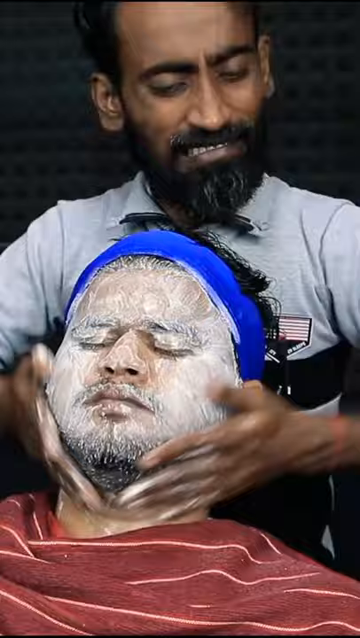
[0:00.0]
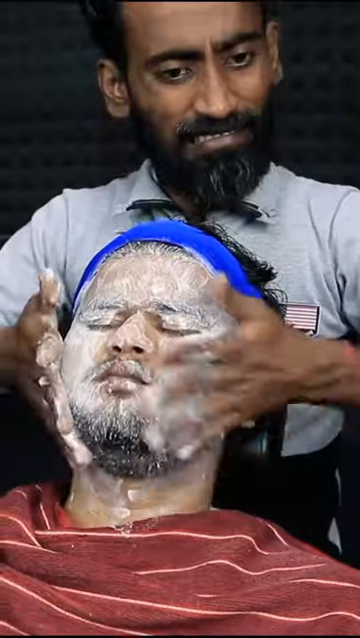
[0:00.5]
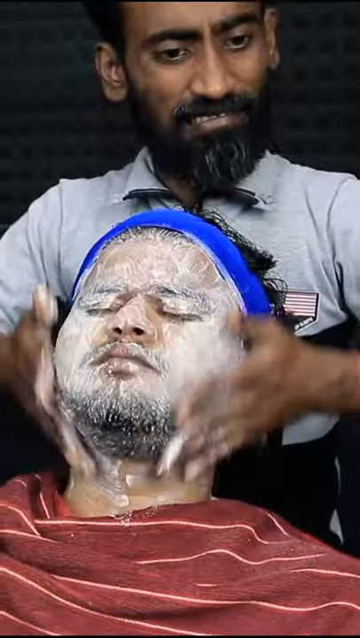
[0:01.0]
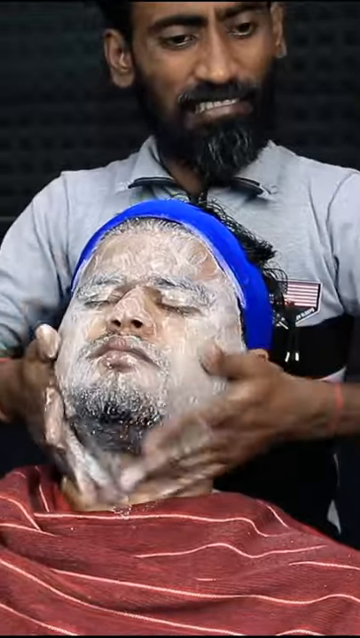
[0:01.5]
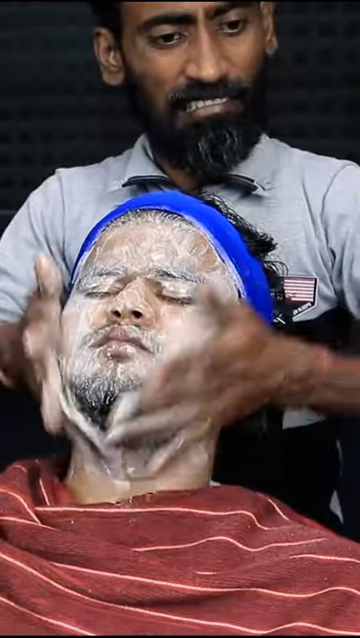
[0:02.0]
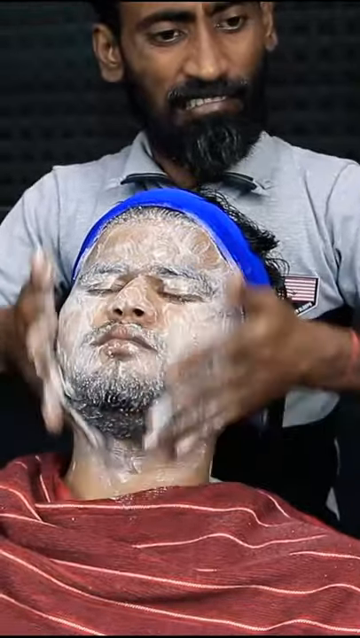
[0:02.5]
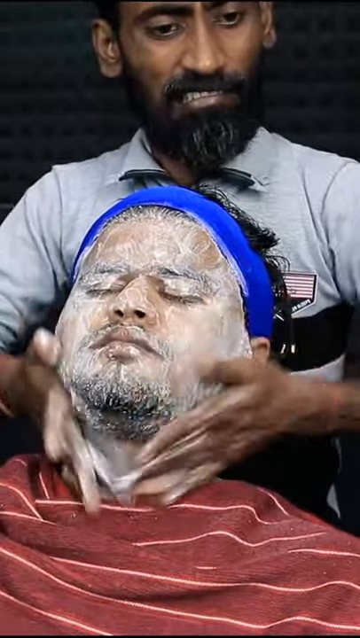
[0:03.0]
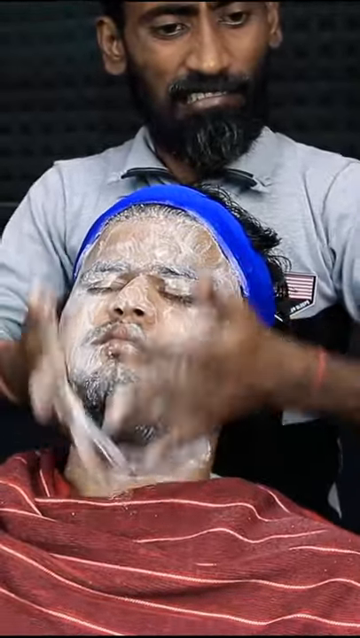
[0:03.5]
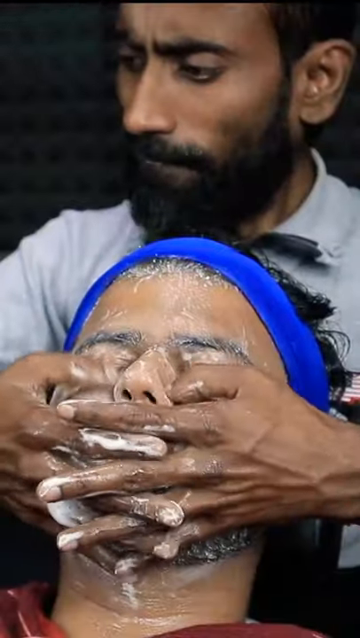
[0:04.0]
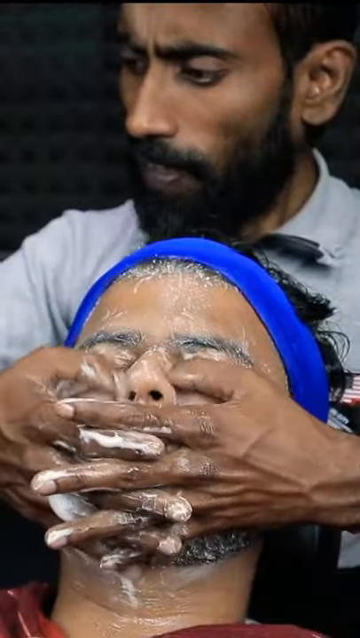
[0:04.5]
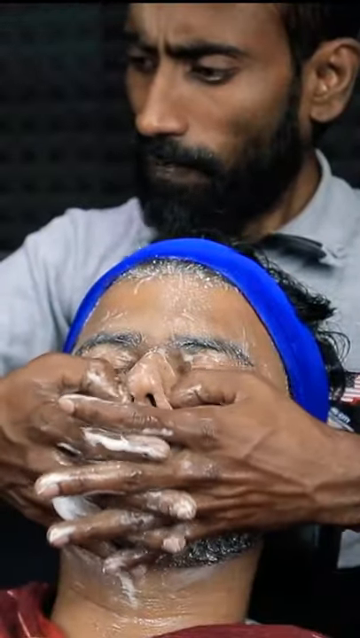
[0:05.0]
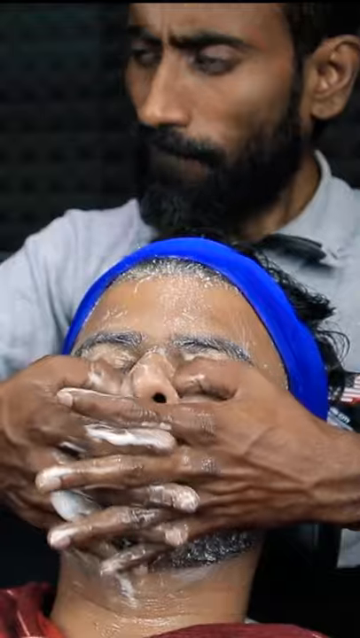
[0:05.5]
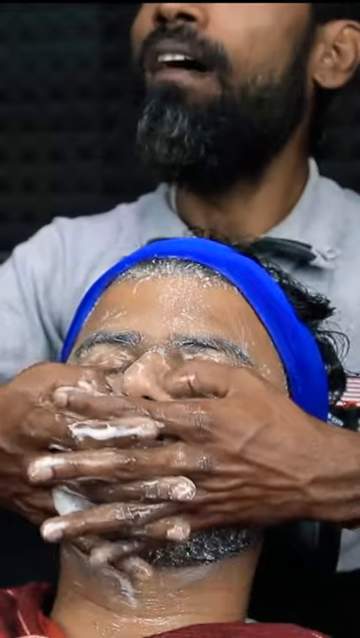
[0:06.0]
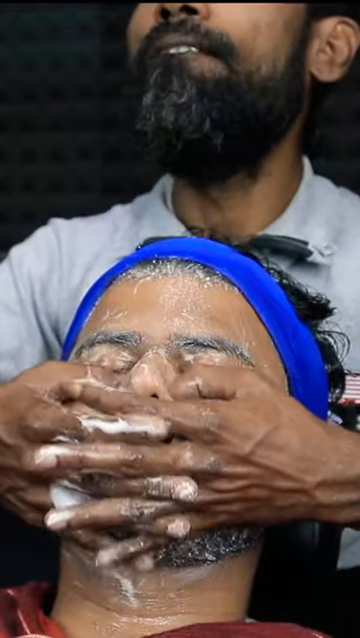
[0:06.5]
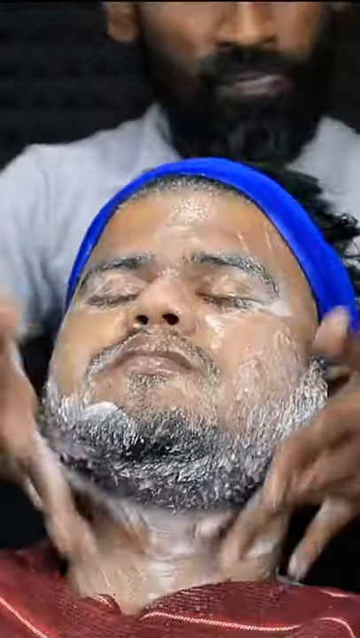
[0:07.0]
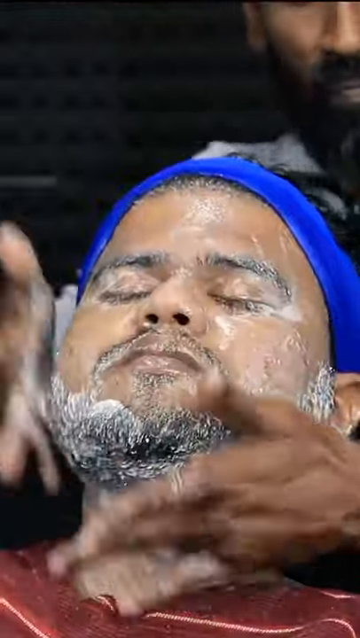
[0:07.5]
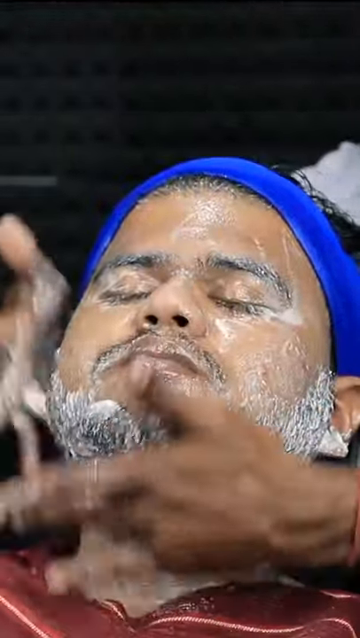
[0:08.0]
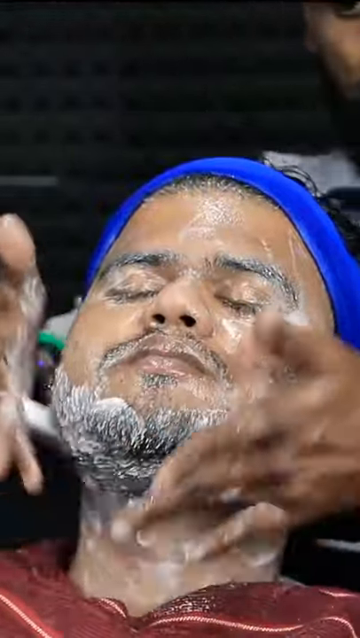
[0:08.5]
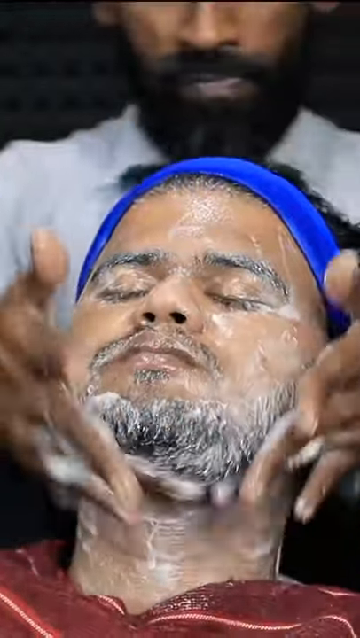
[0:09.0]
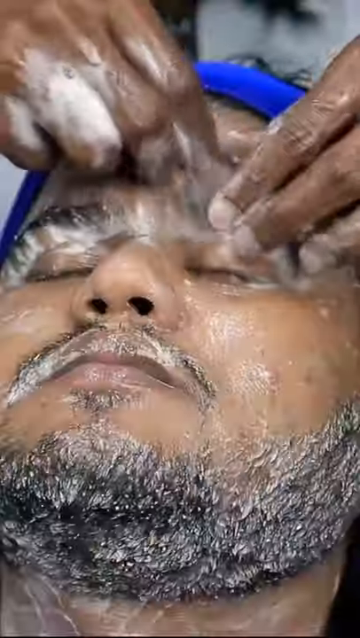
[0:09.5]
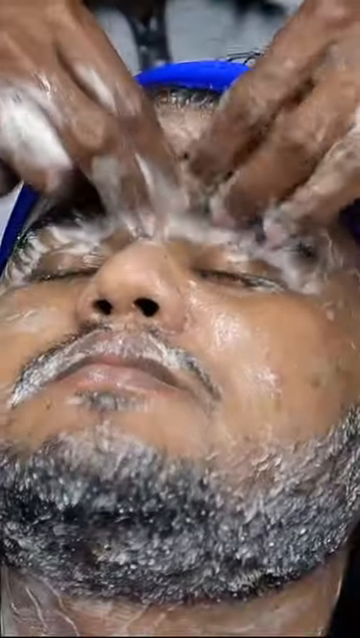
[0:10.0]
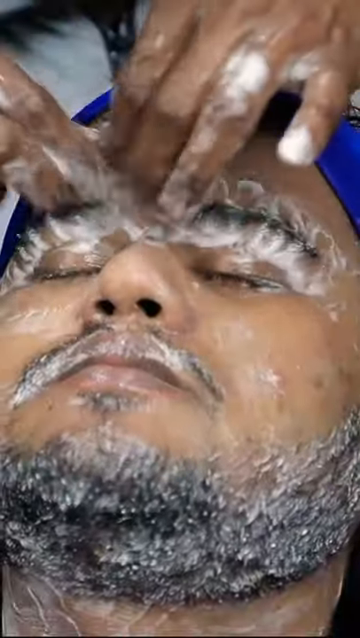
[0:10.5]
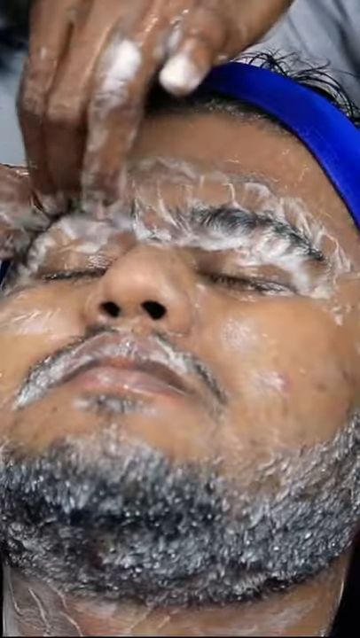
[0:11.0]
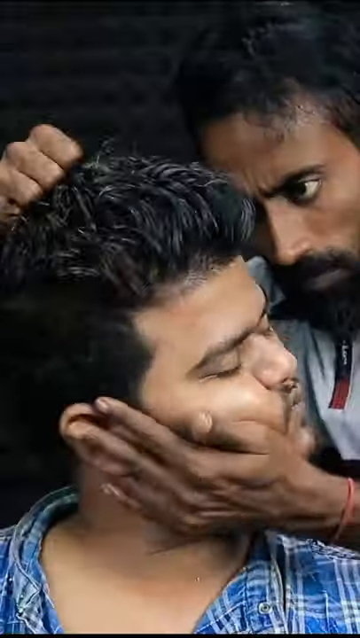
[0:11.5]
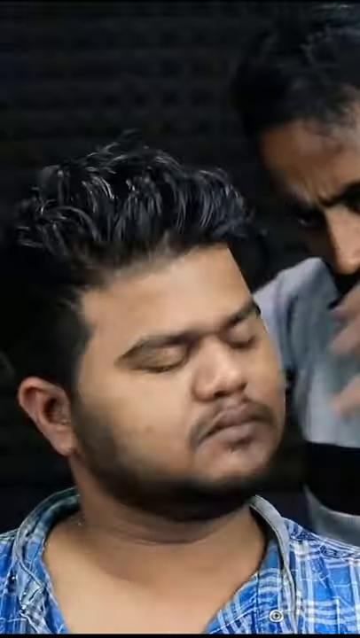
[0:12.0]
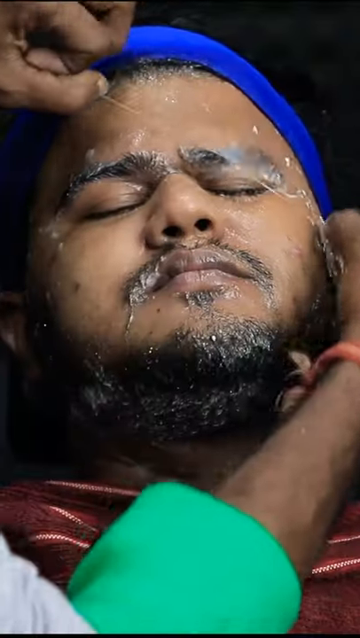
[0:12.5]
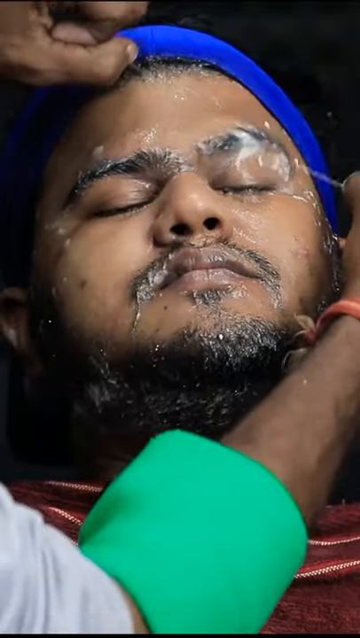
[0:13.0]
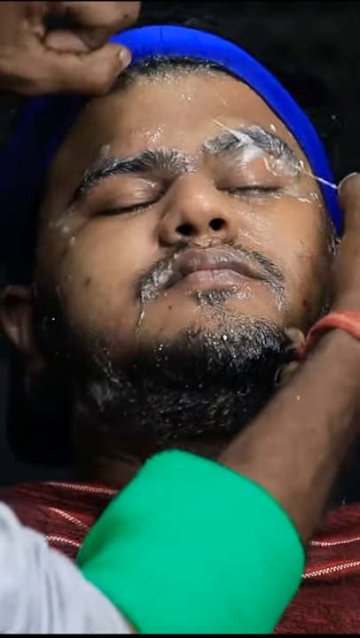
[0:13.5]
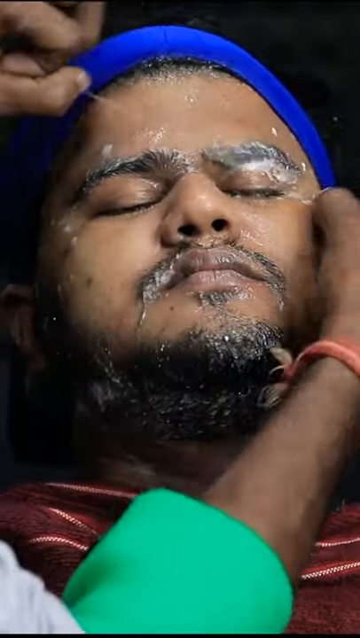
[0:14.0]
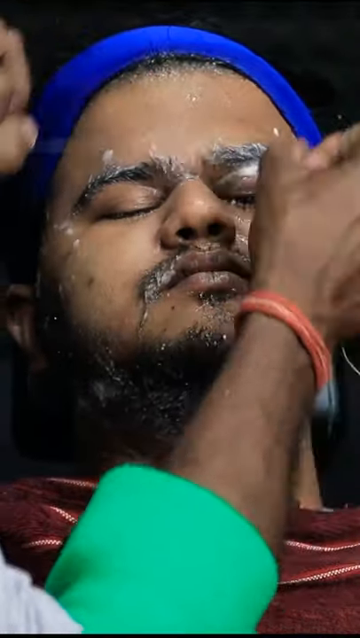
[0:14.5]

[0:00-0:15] A man is scrubbing or massaging and doing facial cleaning for another man who is laying there. He rubs some soap material into the eyebrows and along the nose, apparently using very vigorous motions with his hands to exfoliate the skin. The man receiving the treatment is very relaxed: he is laying down in a barber chair, wears a blue hat, and keeps his eyes closed. At one point he appears to be really getting scrubbed. The man twists the other man's head, which probably cracks the neck as part of the treatment. Overall, there seems to be a very liberal amount of soap or cleaning on the face.